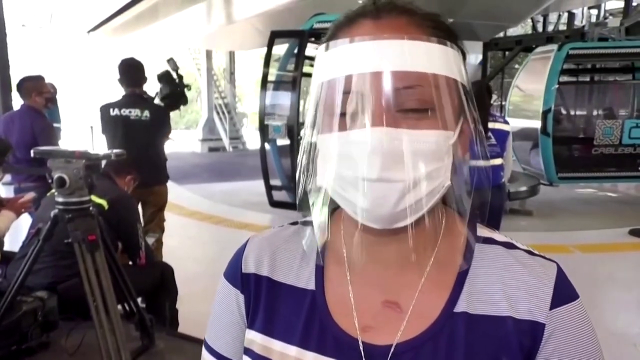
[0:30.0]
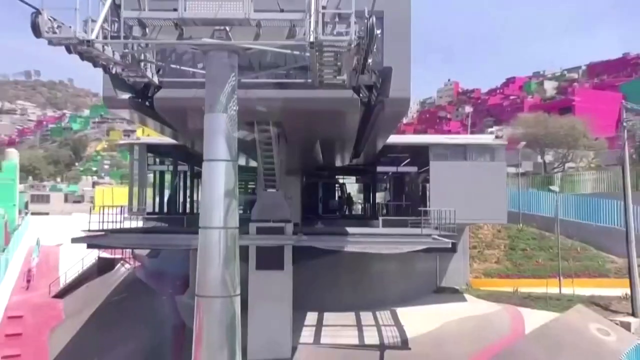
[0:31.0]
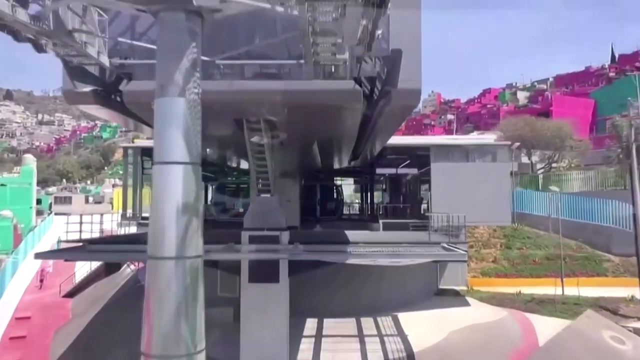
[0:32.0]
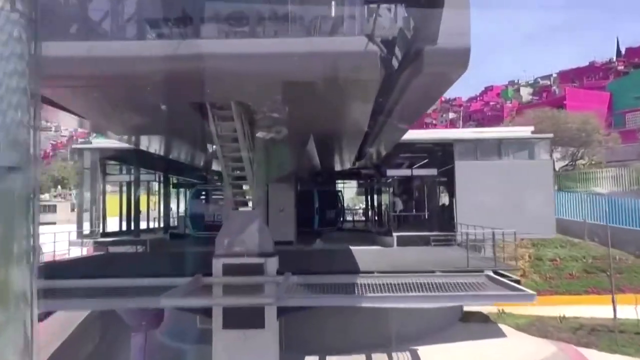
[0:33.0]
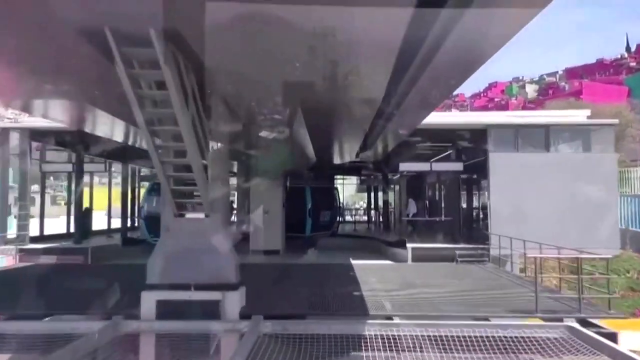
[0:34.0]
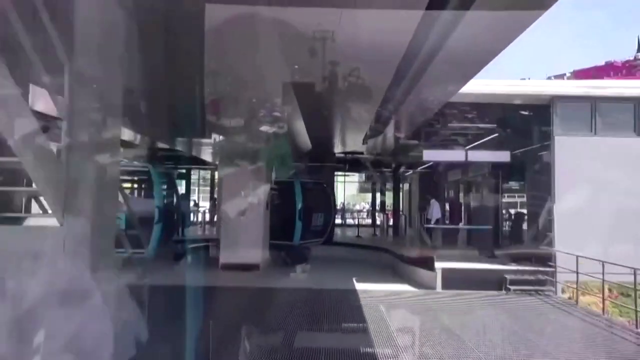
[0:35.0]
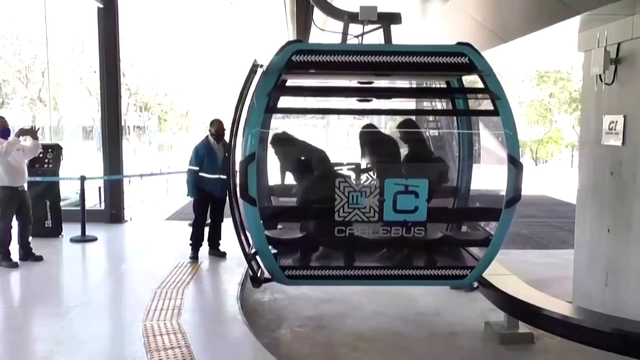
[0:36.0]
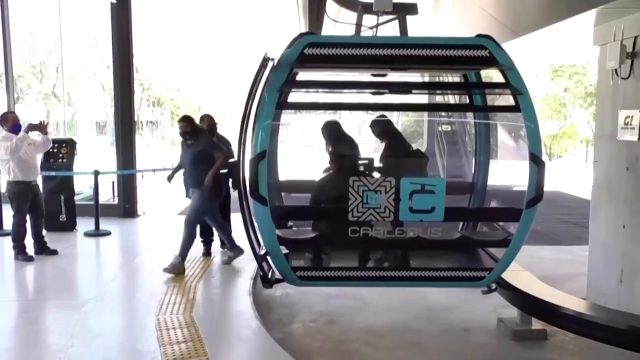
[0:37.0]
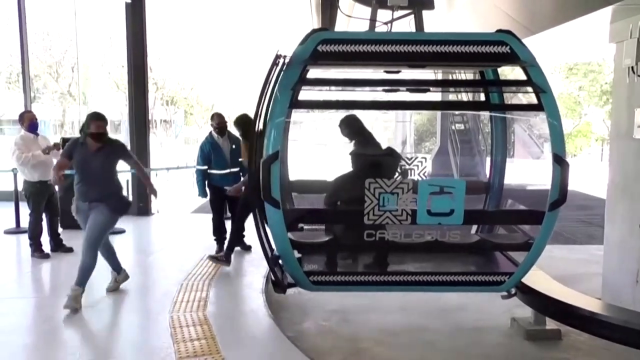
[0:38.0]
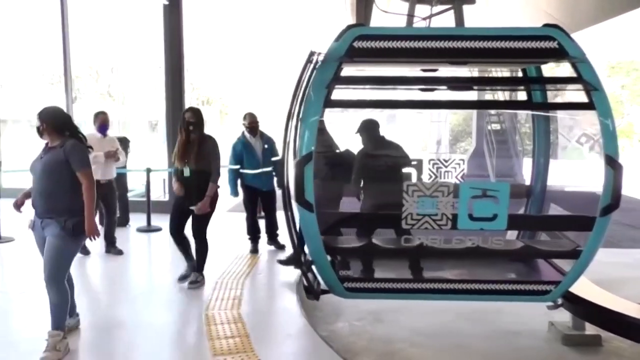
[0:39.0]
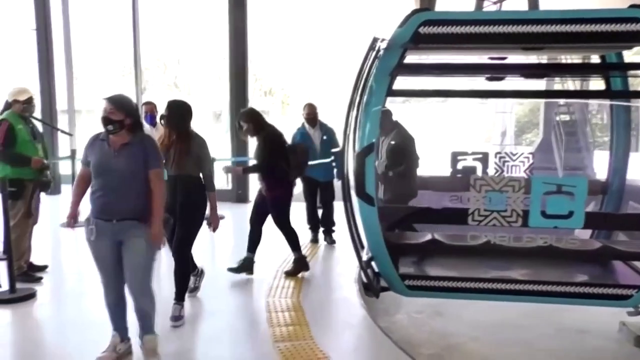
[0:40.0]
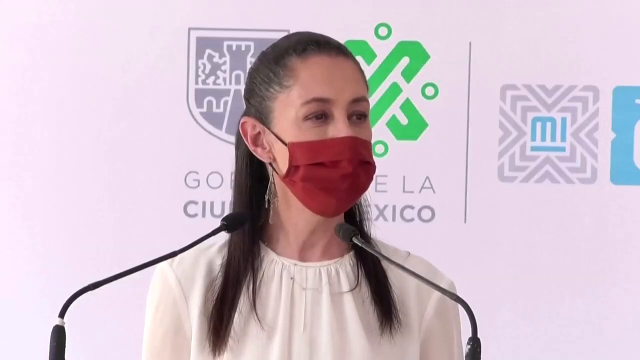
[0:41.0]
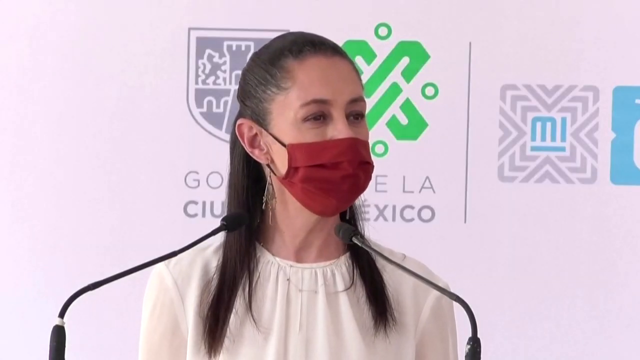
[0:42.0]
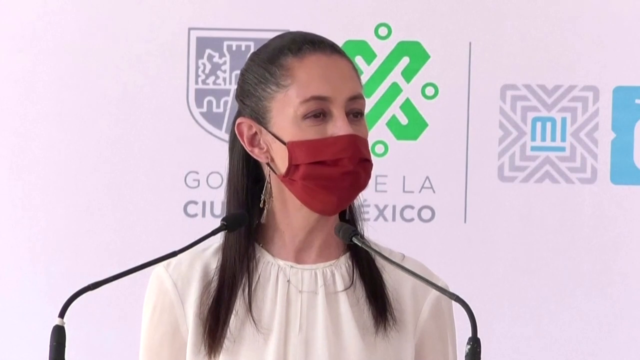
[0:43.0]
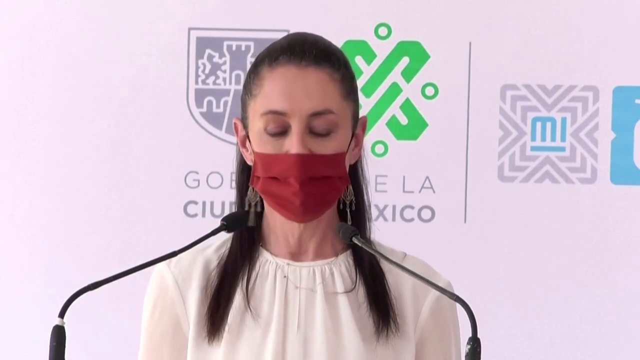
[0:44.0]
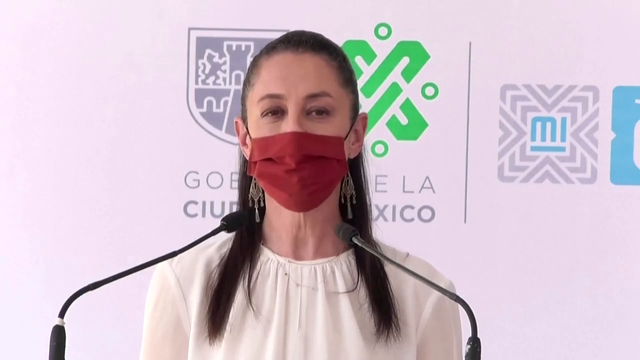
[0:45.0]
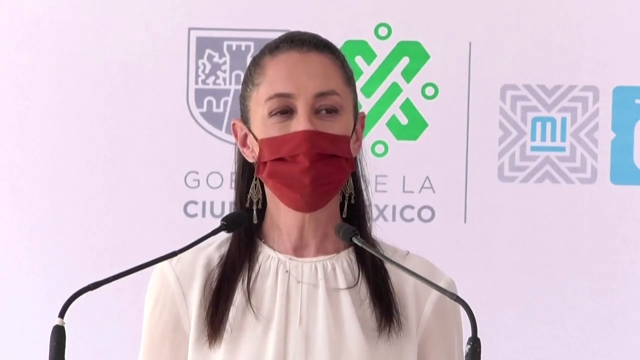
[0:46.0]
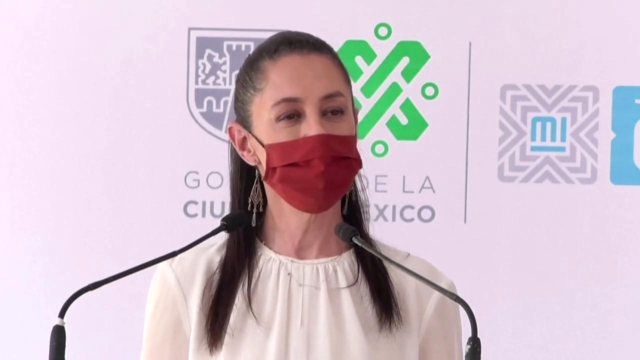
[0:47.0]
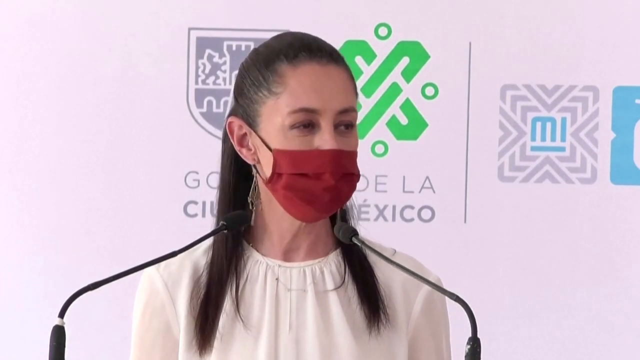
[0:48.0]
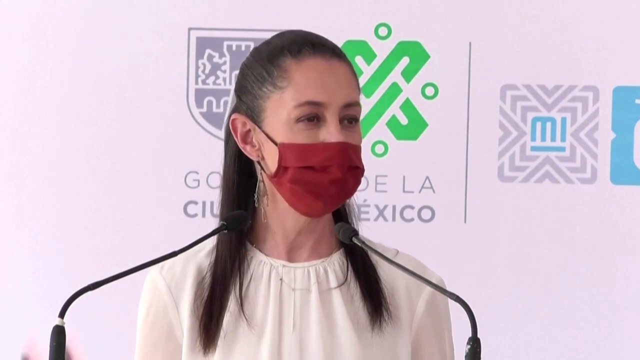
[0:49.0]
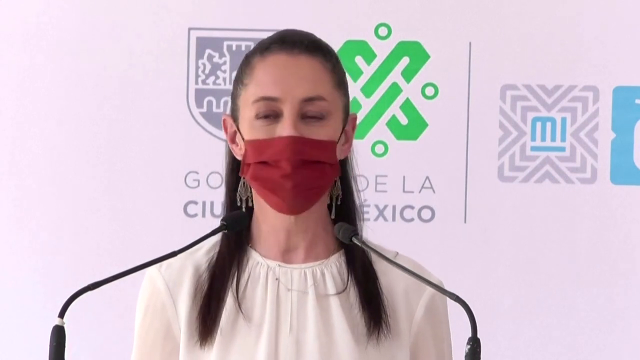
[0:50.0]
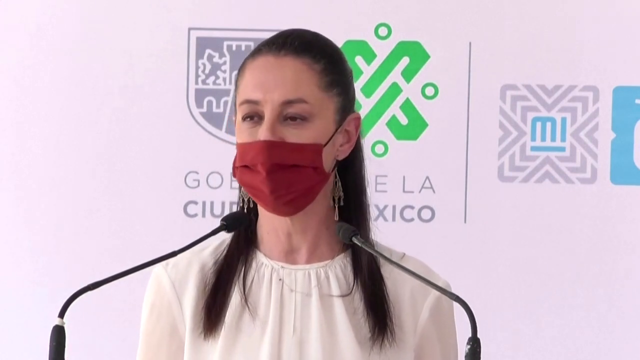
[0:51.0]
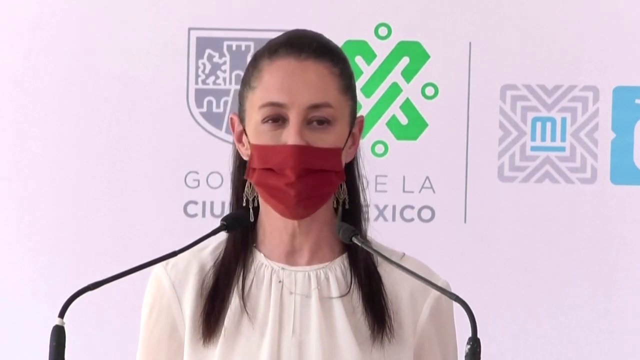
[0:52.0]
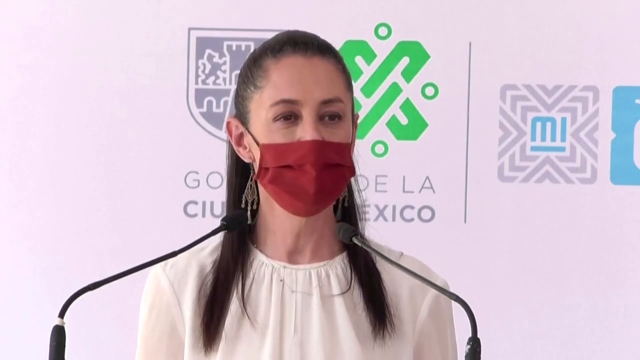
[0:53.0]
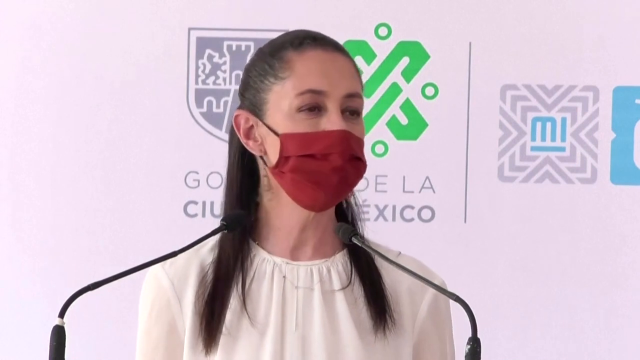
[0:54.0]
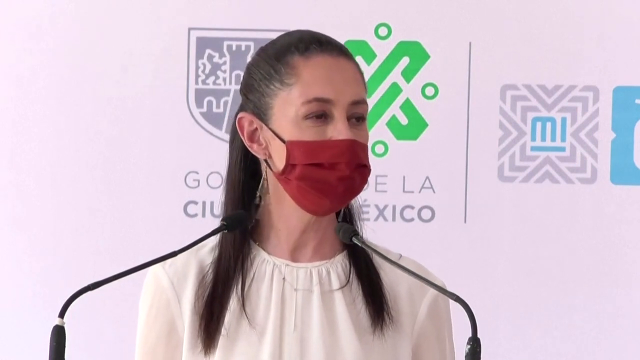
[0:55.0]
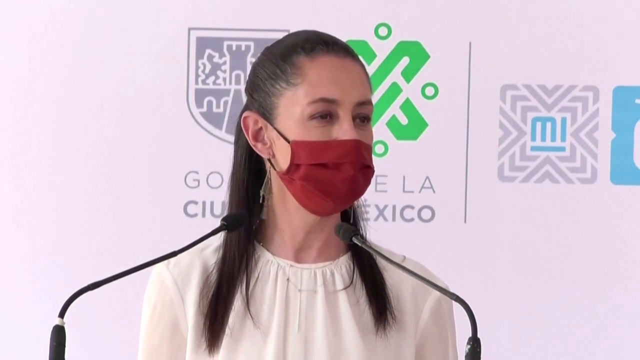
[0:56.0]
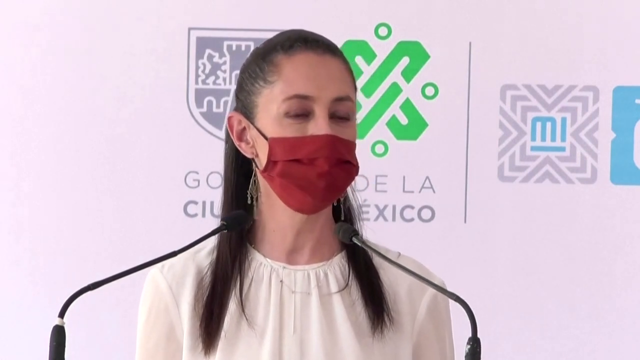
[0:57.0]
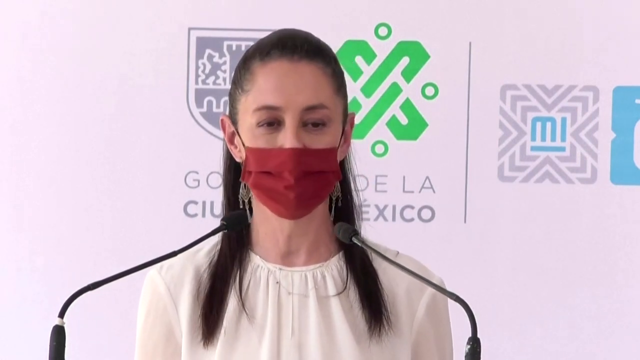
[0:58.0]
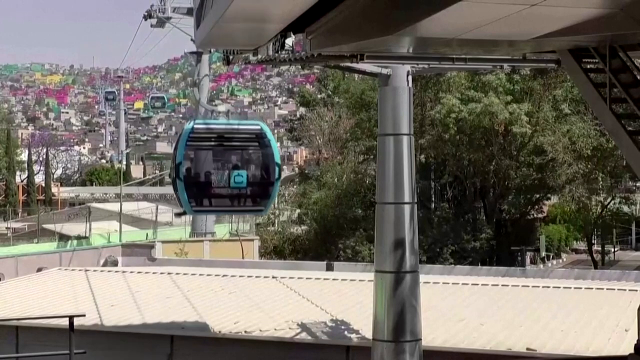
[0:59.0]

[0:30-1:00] A woman wears a face shield and a white COVID mask, along with a purple and white striped shirt and a necklace. She has a scar on her chest. Behind her are a couple of people: two are standing, one of them with a camera, and another man is sitting. In the background are a bunch of these devices that look like they are for traveling over the city to see the scenery. The video then shows a very large building, with other buildings in the distance that are pink on the right side, a fence, and green, yellow and pink buildings on the left side. The camera moves forward as if to go into these buildings. Three people then come off one of the cable buses; a man stands to the side to let them out while another man in a white shirt and black mask records them exiting, and they walk kind of toward the camera. The scene transitions to a woman with brown pulled-back hair wearing a red mask, speaking into two thin microphones in front of a white backdrop with various colored icons on the wall; her face is covered by the mask as she talks. Then a blue cable car with some people on it comes down toward the camera.